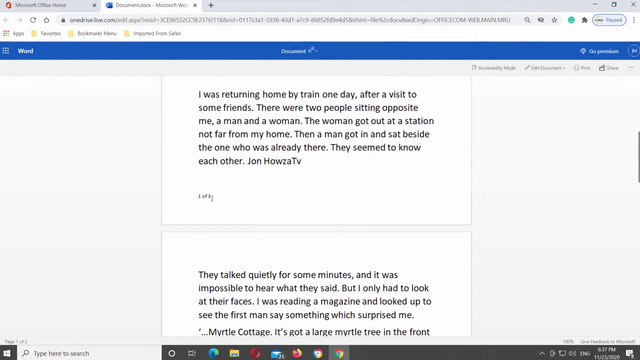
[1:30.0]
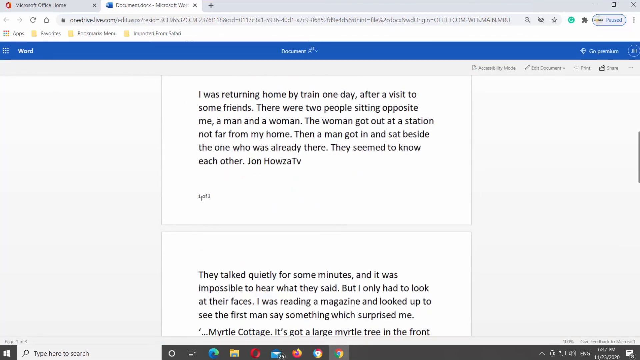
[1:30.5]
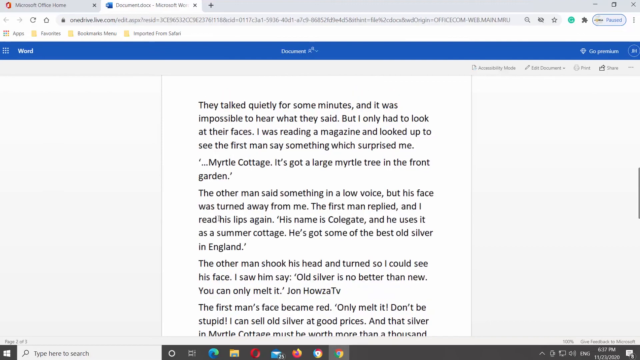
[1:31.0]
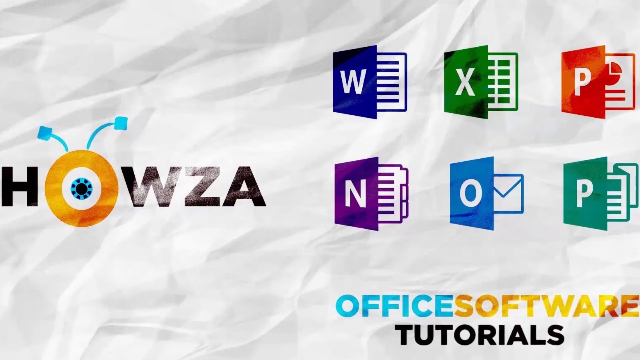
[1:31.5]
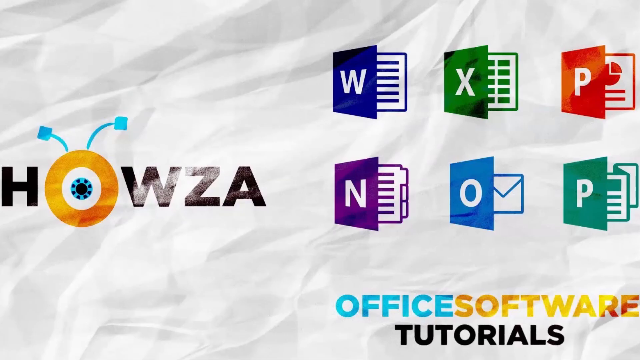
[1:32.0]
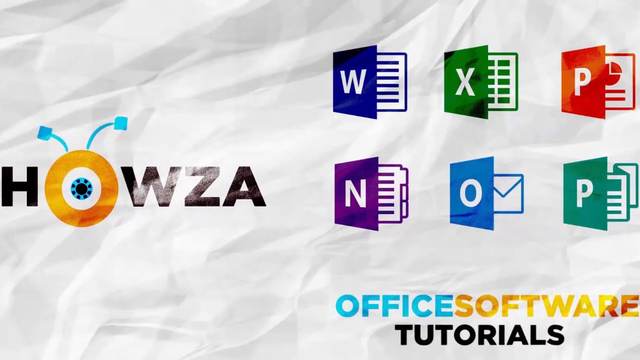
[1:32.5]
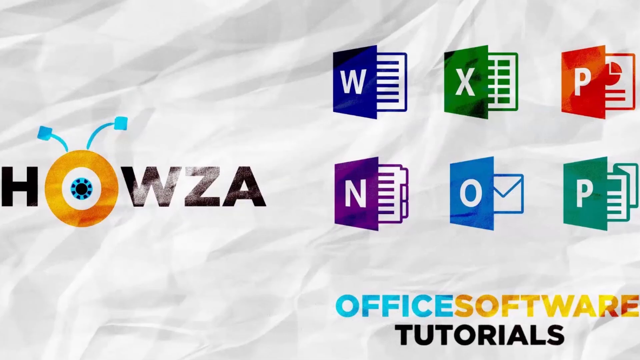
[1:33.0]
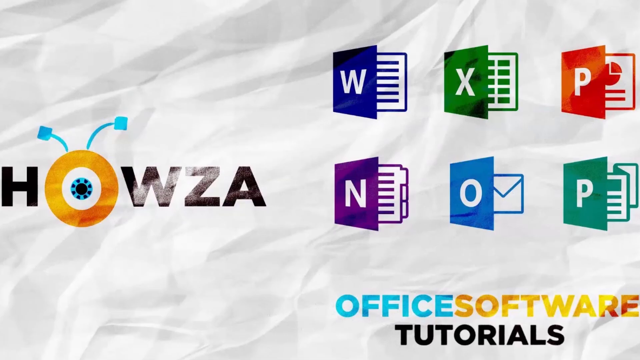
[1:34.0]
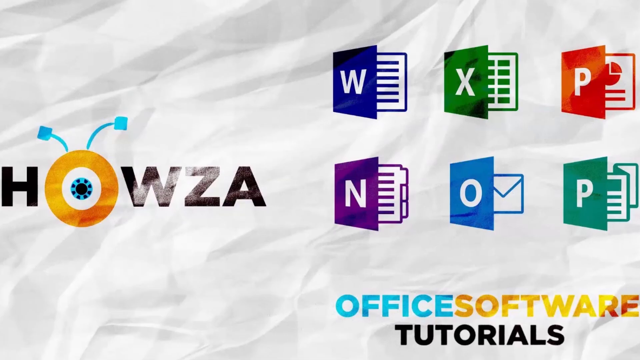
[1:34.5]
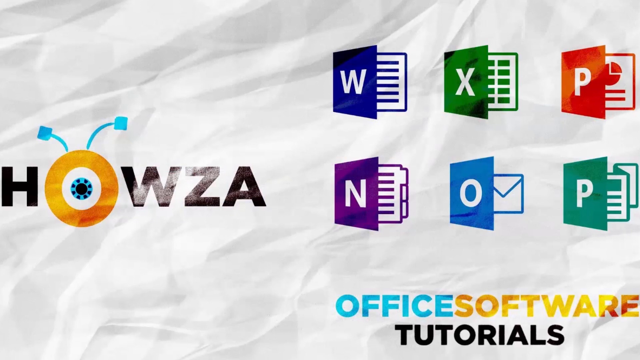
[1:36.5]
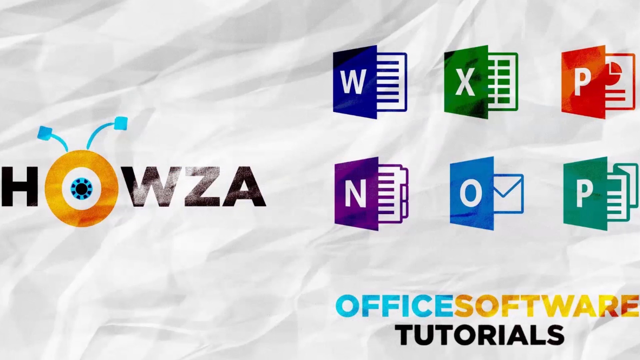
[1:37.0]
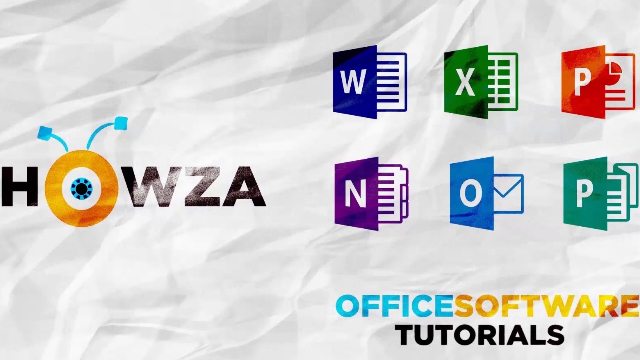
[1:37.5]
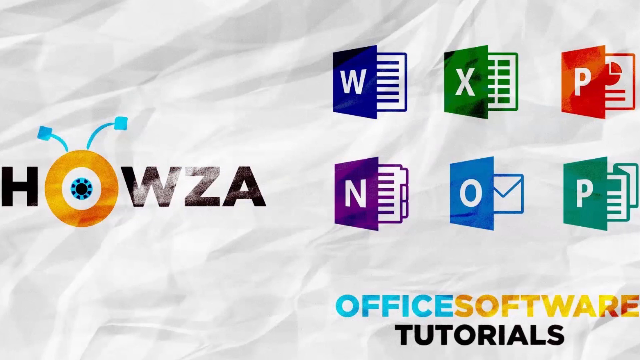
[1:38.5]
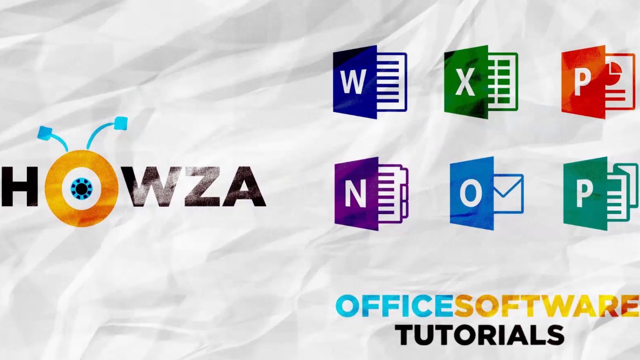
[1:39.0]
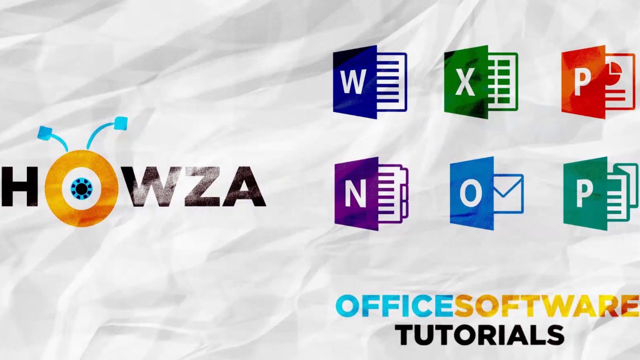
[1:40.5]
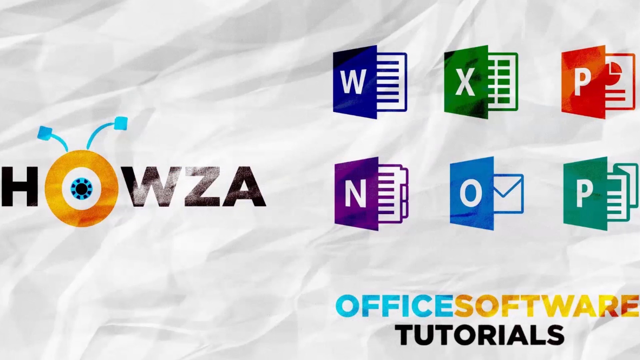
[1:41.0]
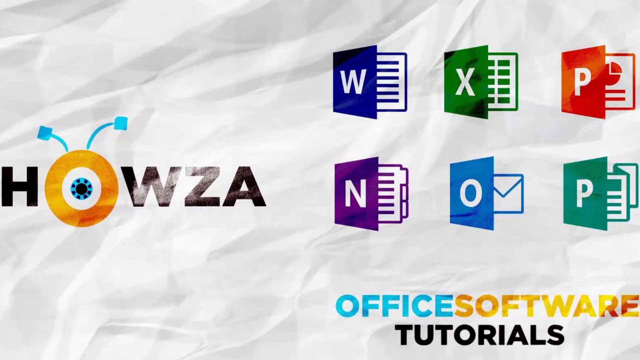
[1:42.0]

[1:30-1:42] The desktop home page displays icons for Word, PowerPoint and Excel, used to create and edit documents. The screen then changes to a document open in the Word app, where a person is editing information introducing himself as a teacher named Trudej who teaches deaf people. The text says his father was the first to teach deaf people using lip reading and that his mother was deaf, and that she joined his father and became a teacher of deaf people who are unable to communicate or use speech. He continues editing the text he is writing to the Howza TV, apparently to share the story of how he was inspired to become a teacher.